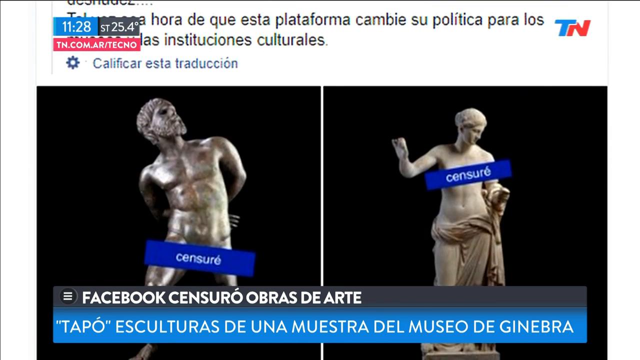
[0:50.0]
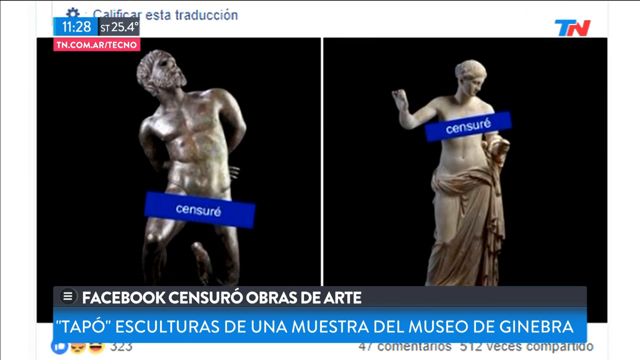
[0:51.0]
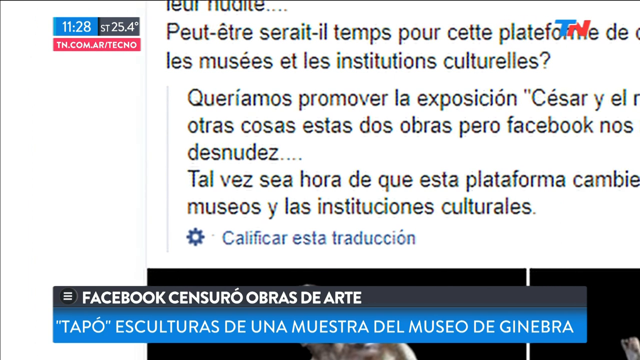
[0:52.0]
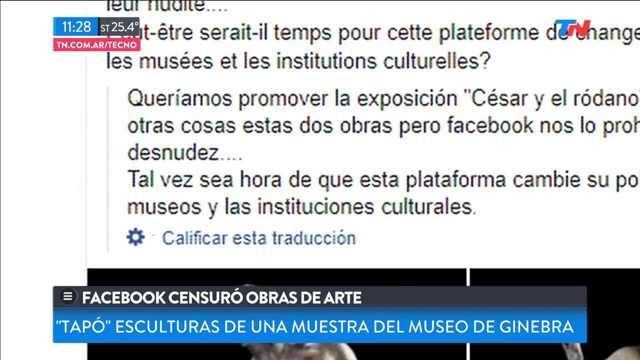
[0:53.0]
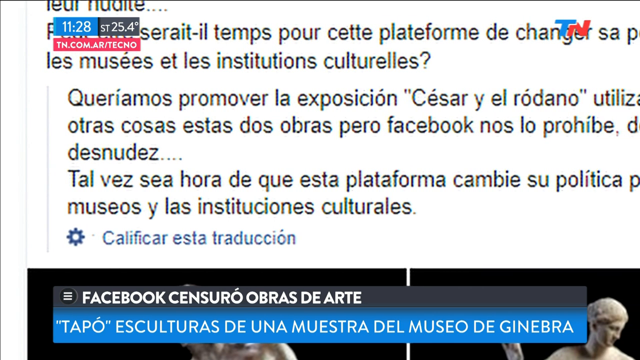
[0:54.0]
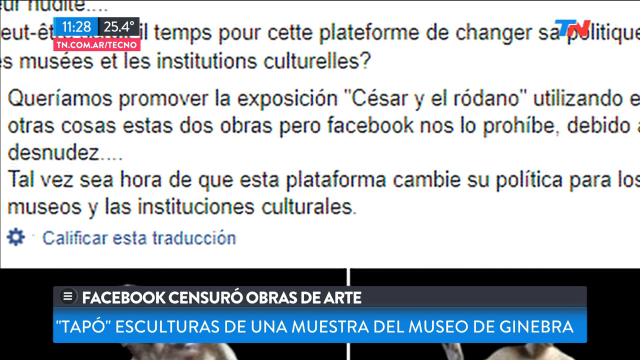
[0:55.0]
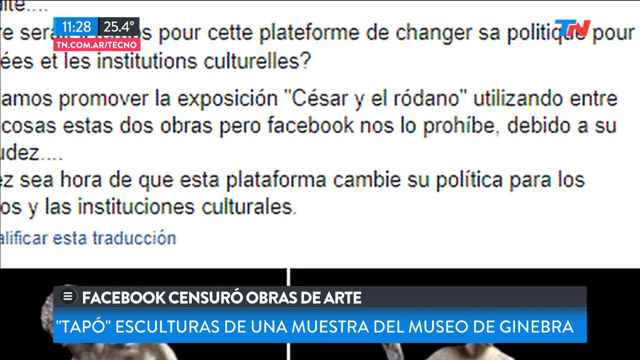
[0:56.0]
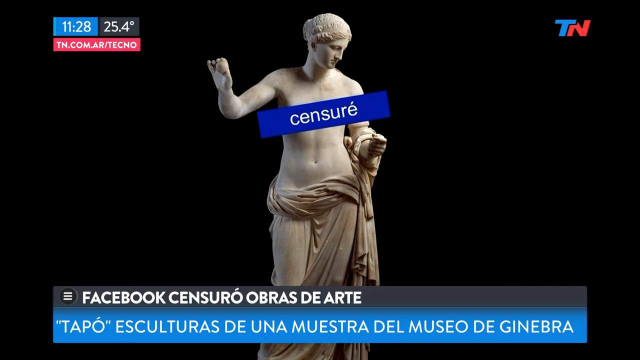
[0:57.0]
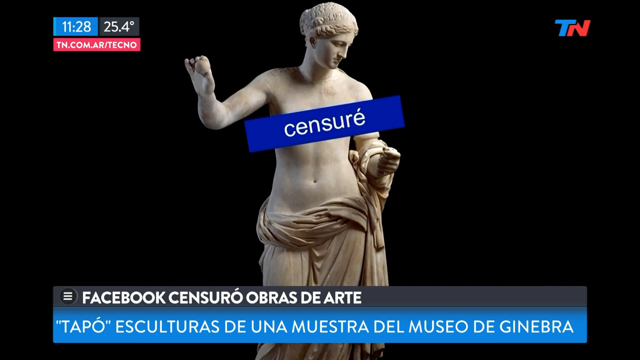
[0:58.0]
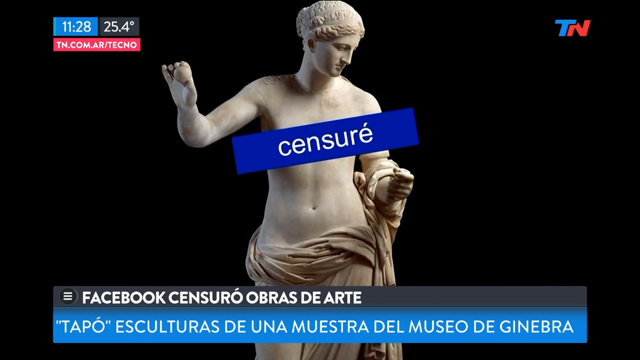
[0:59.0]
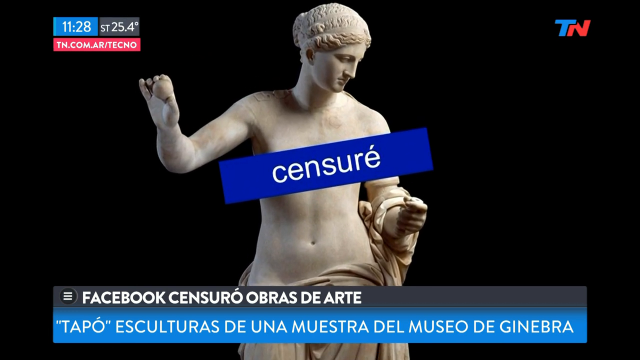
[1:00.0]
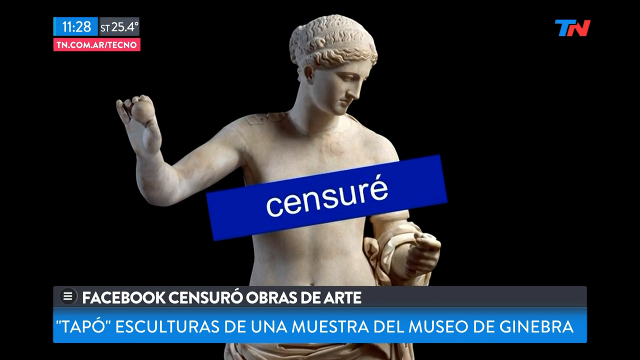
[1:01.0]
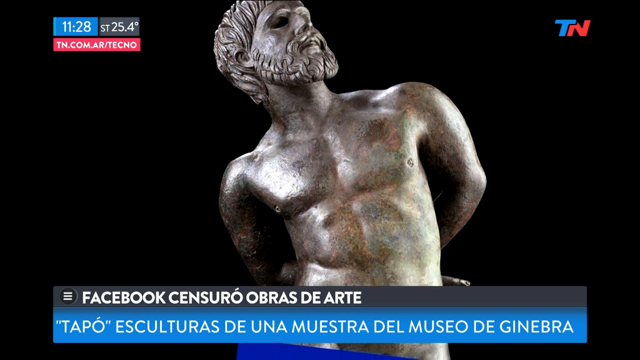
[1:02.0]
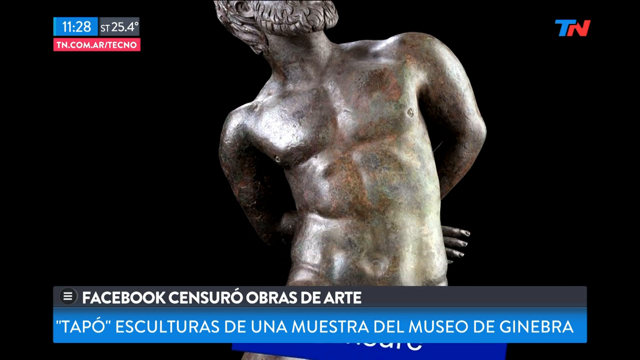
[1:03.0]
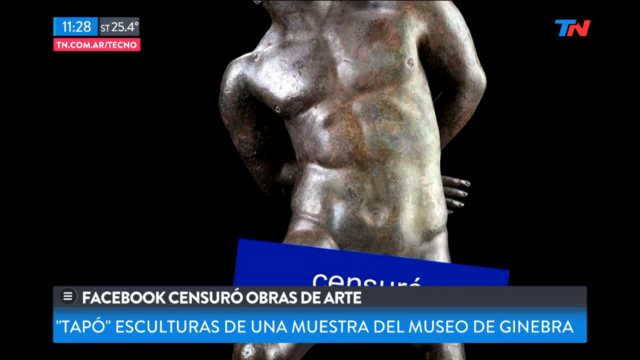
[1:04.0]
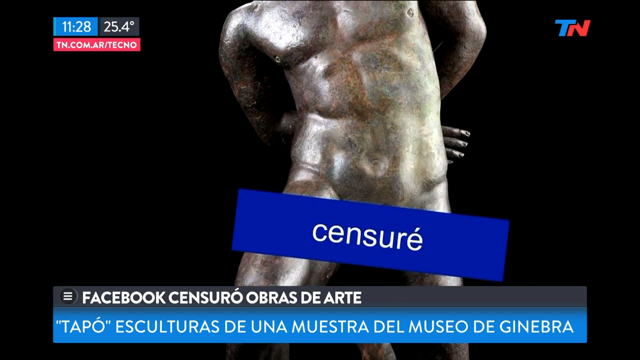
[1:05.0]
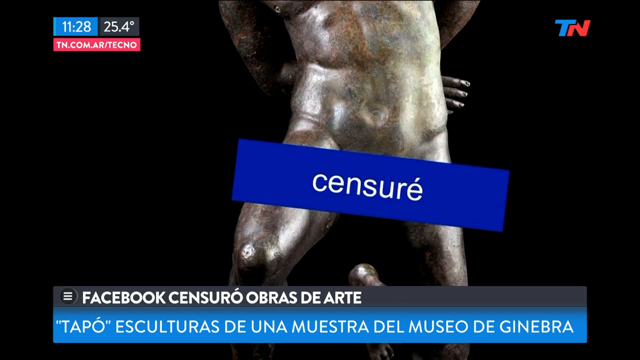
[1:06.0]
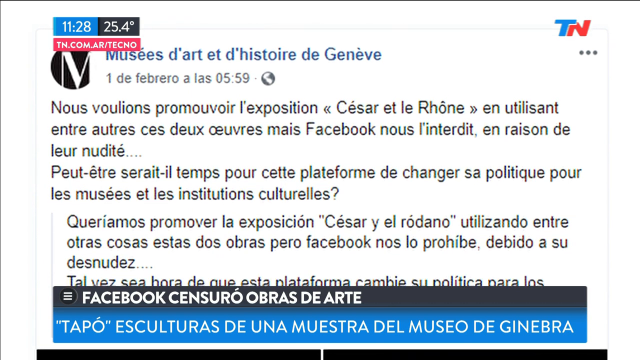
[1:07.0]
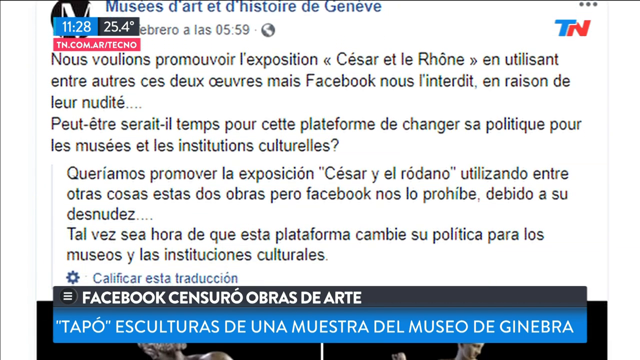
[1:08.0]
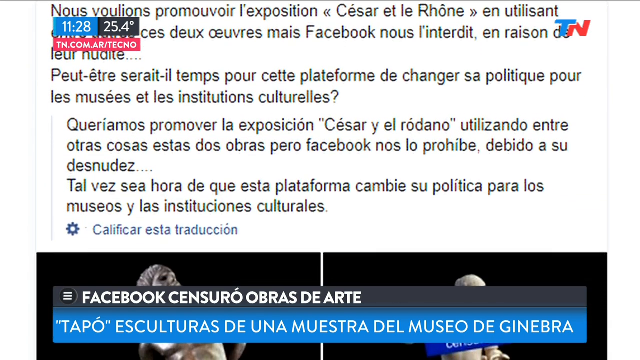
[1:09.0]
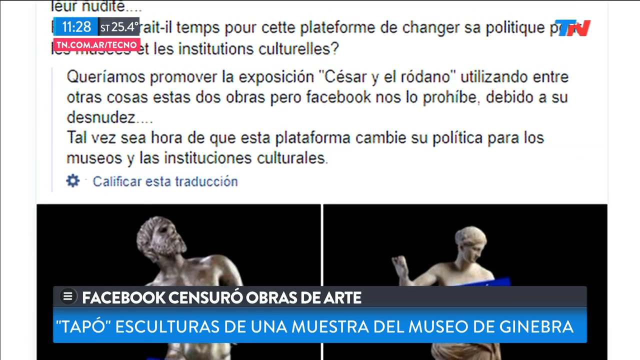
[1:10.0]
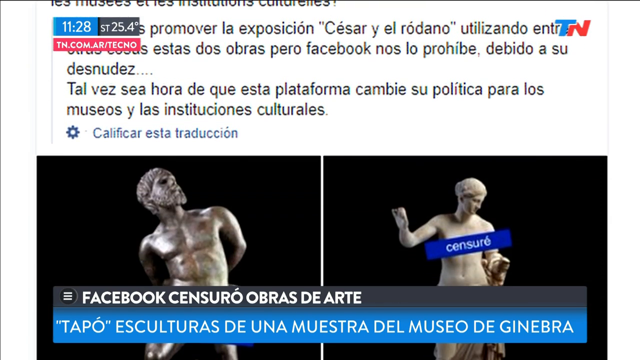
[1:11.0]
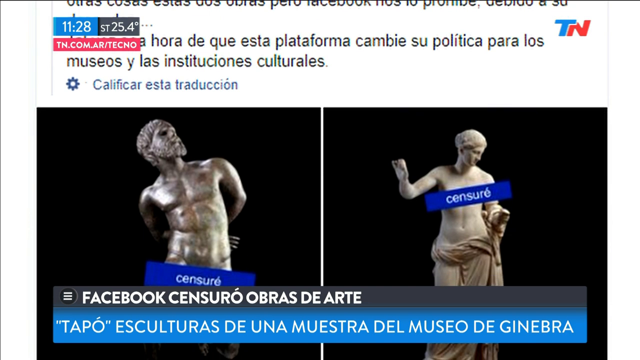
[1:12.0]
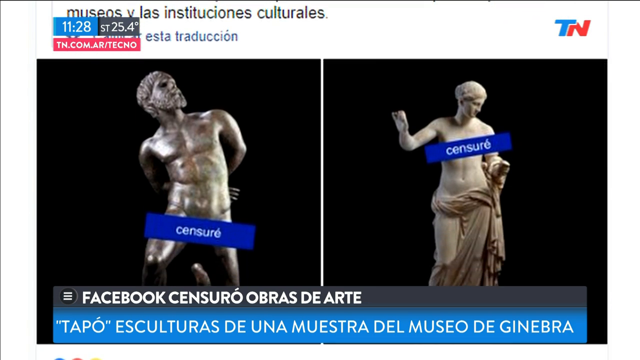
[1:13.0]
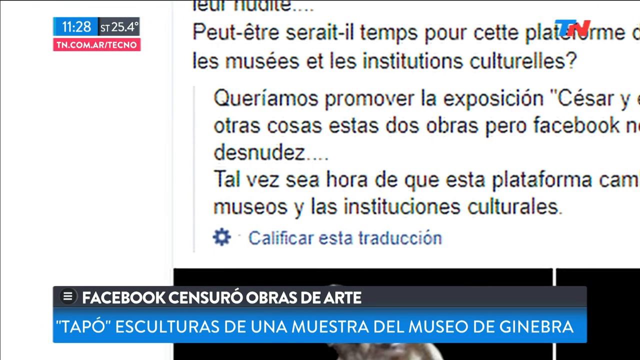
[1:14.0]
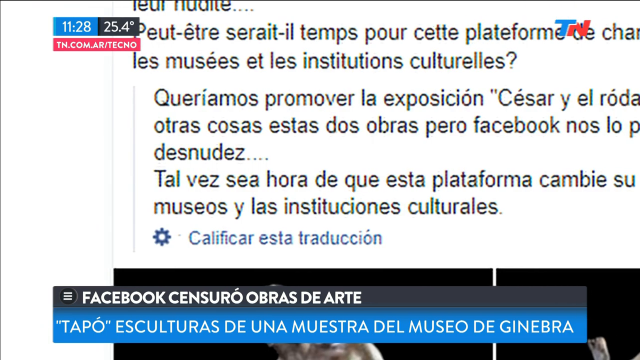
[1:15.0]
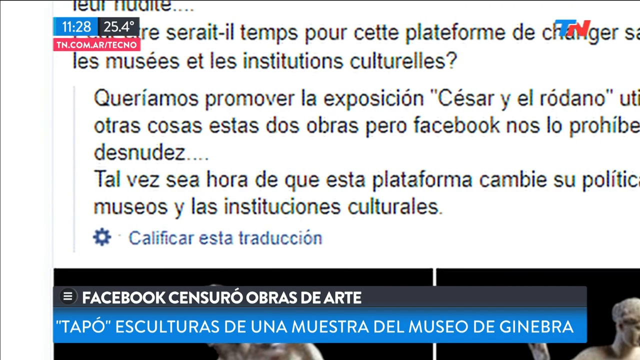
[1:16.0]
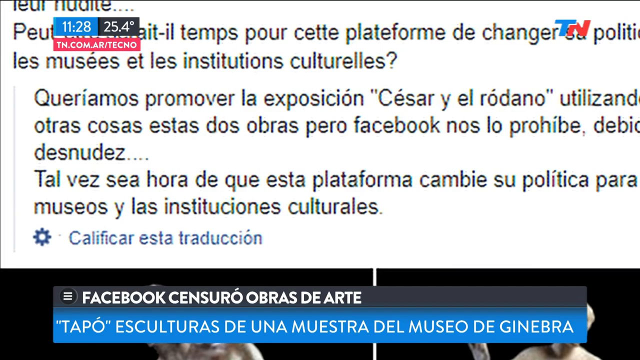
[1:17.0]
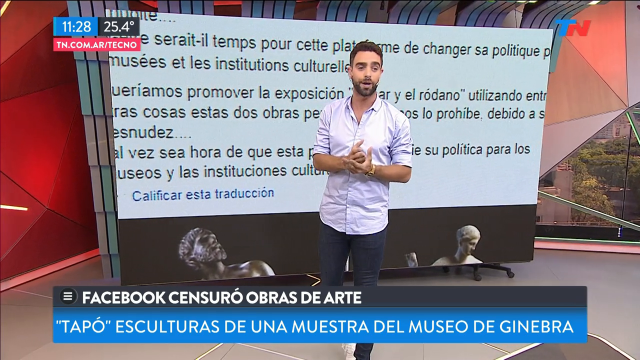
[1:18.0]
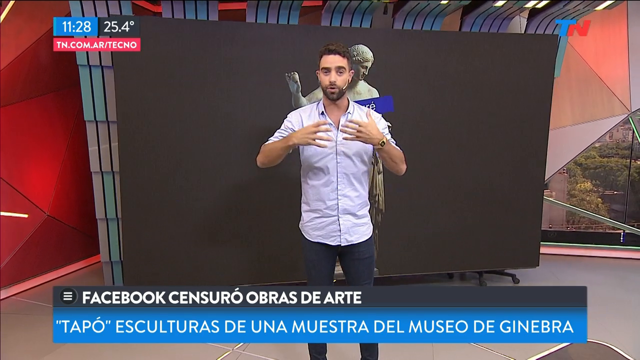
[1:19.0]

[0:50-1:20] Statues and information about them keep appearing and disappearing from the screen from all angles, moving sideways and up, like a screensaver on a computer monitor. Later, the young man moves forward towards the camera, using hand gestures, with his mouth moving and facial expressions visible as he appears to describe what is shown on the screen. The banner moves away from the camera, apparently as the camera moves away from the screen, which still shows the statues.